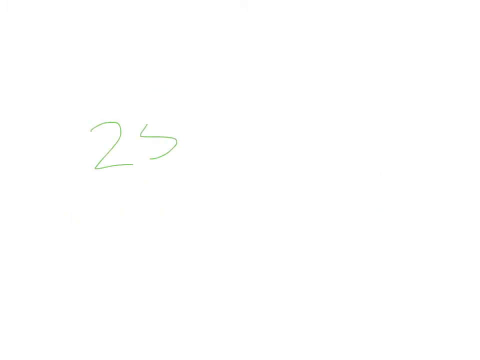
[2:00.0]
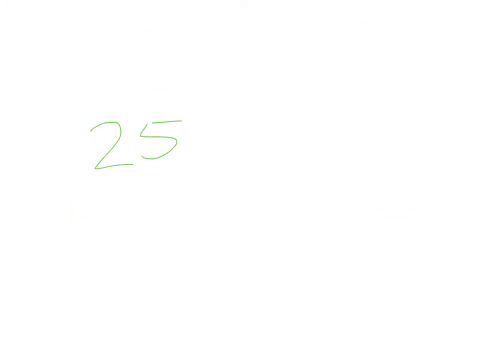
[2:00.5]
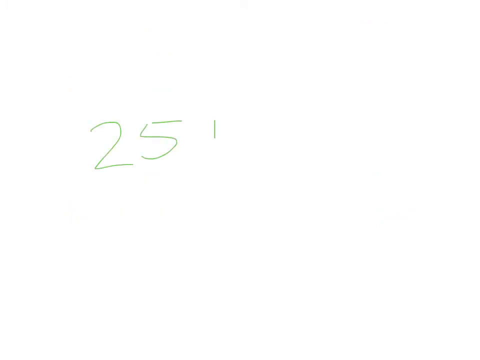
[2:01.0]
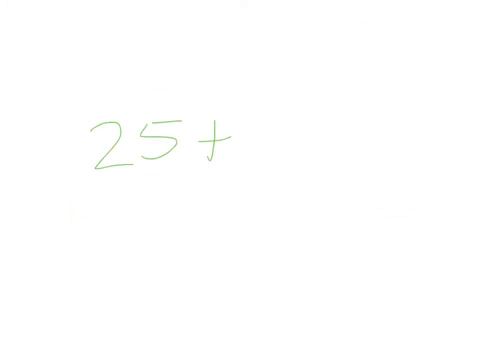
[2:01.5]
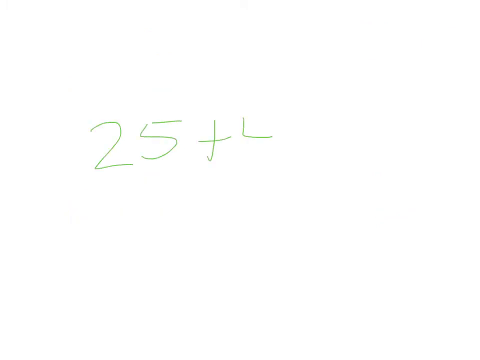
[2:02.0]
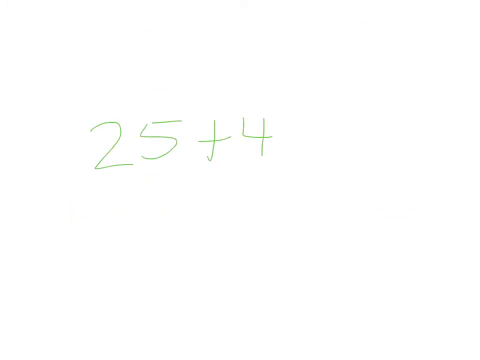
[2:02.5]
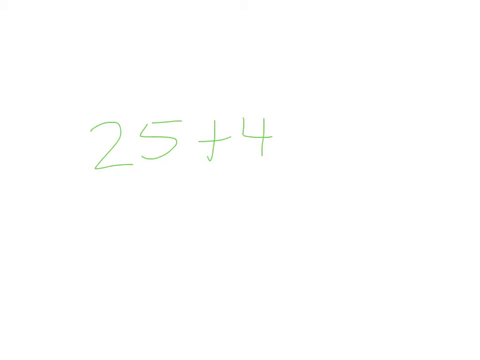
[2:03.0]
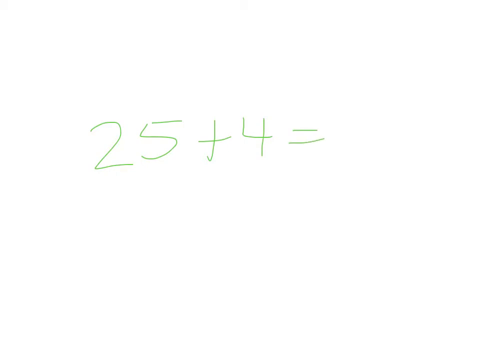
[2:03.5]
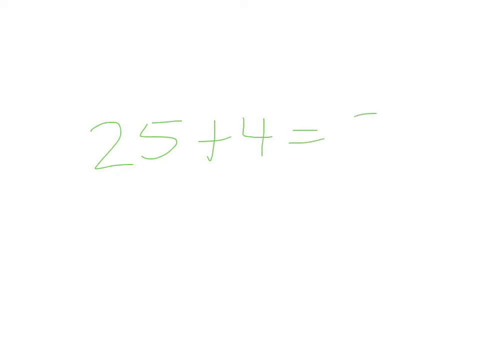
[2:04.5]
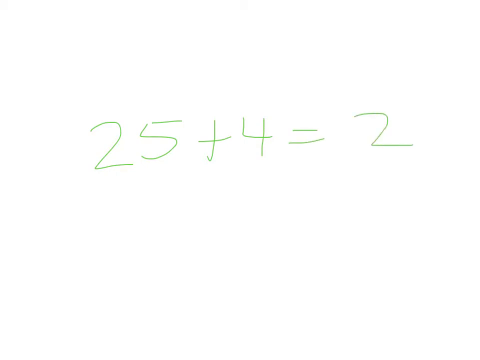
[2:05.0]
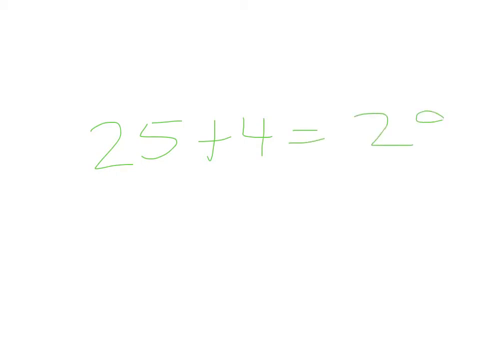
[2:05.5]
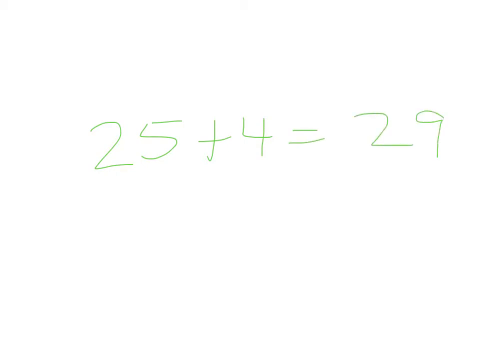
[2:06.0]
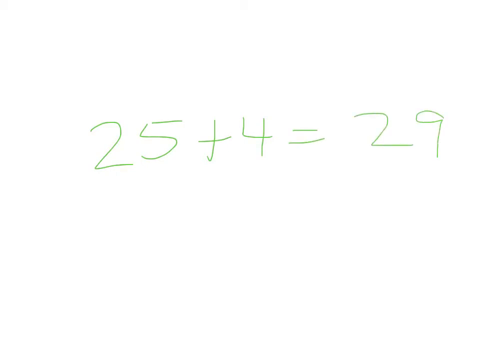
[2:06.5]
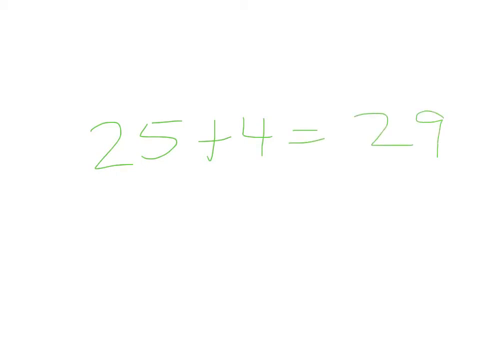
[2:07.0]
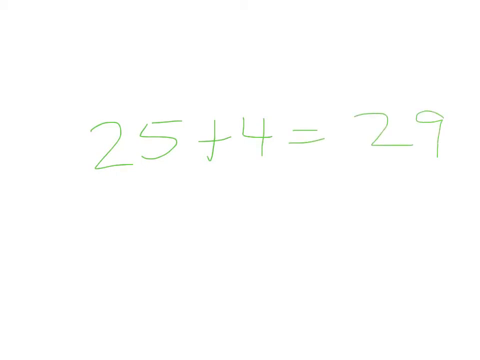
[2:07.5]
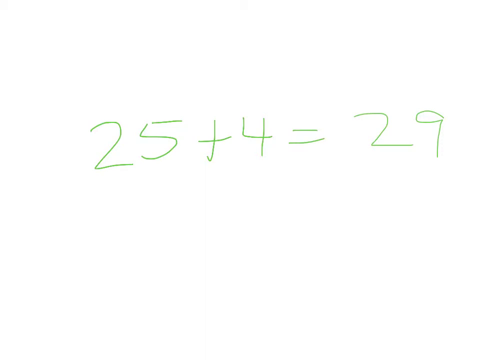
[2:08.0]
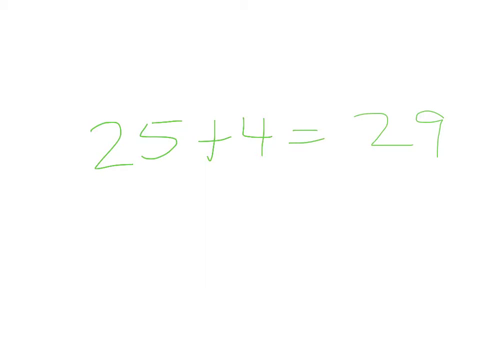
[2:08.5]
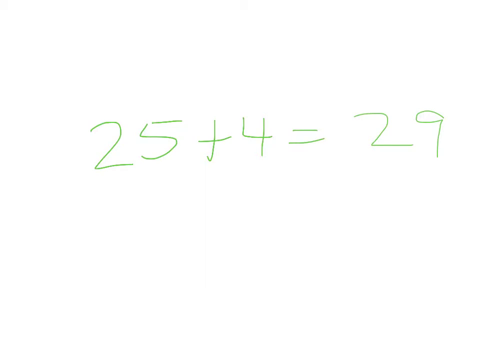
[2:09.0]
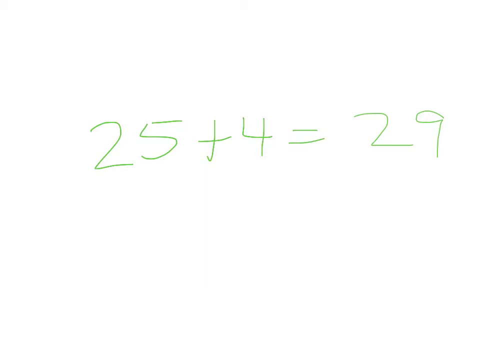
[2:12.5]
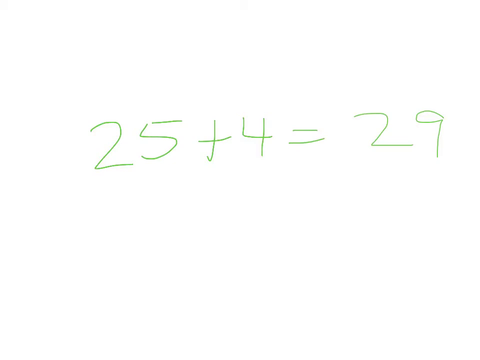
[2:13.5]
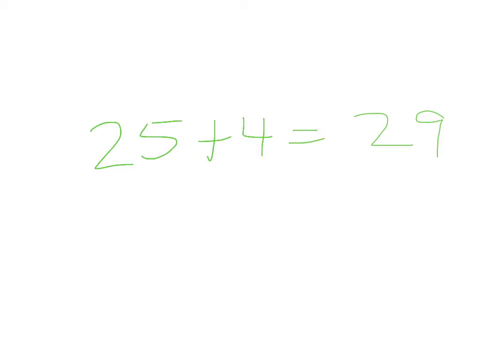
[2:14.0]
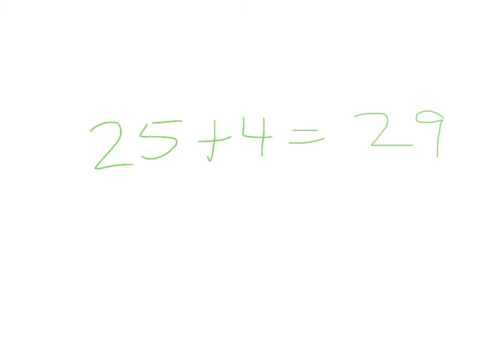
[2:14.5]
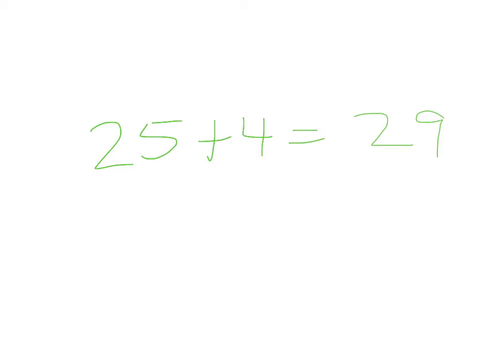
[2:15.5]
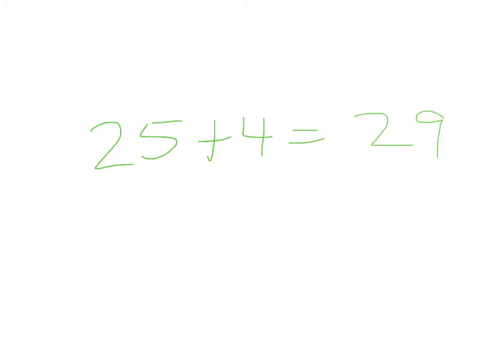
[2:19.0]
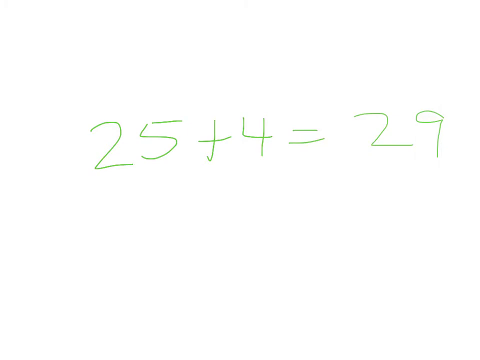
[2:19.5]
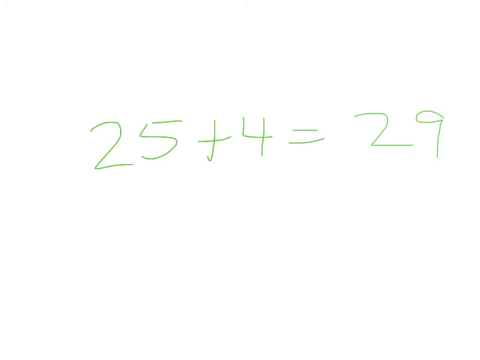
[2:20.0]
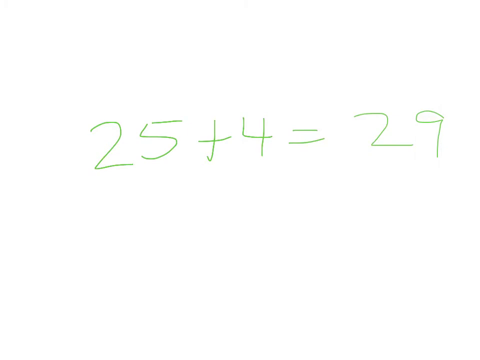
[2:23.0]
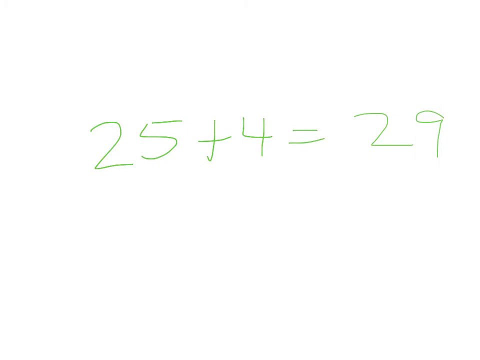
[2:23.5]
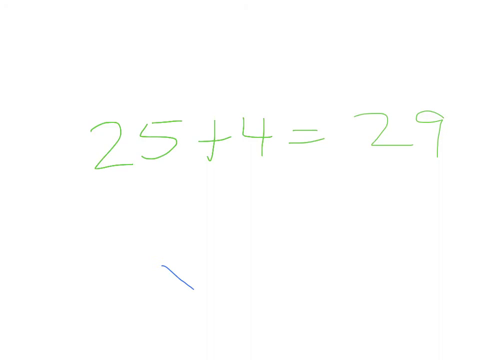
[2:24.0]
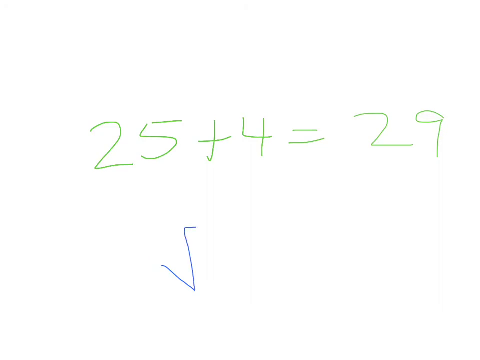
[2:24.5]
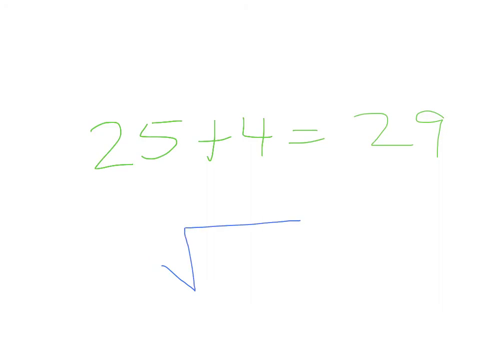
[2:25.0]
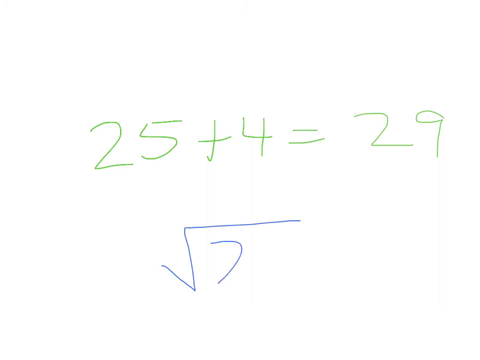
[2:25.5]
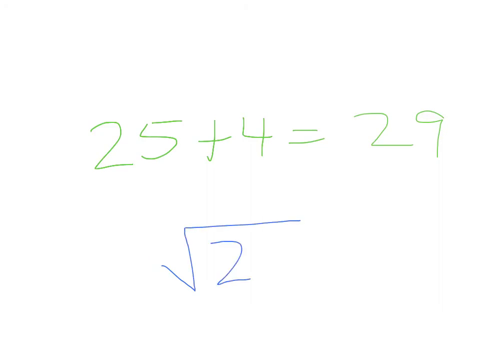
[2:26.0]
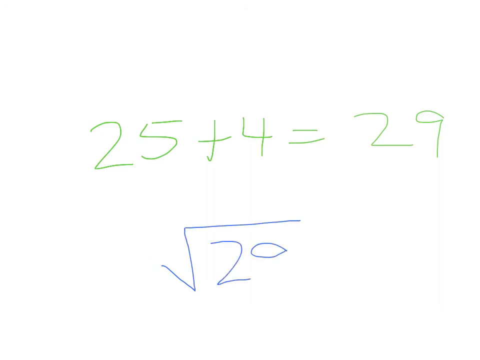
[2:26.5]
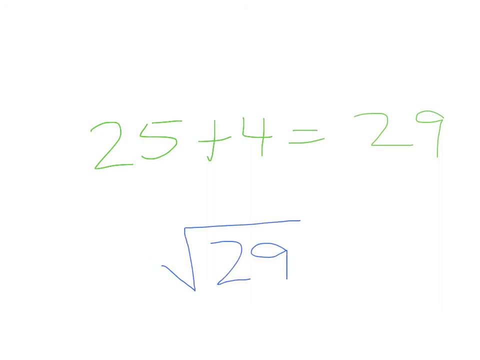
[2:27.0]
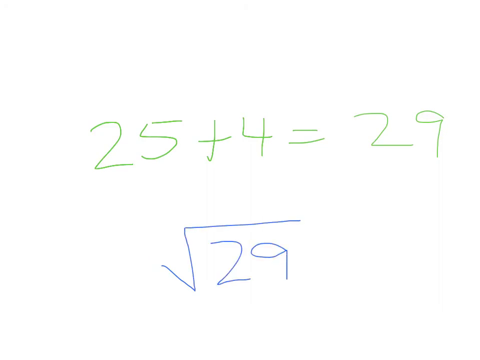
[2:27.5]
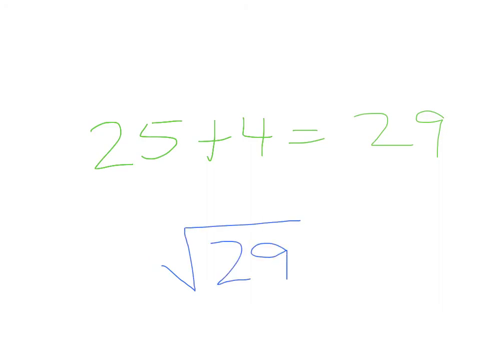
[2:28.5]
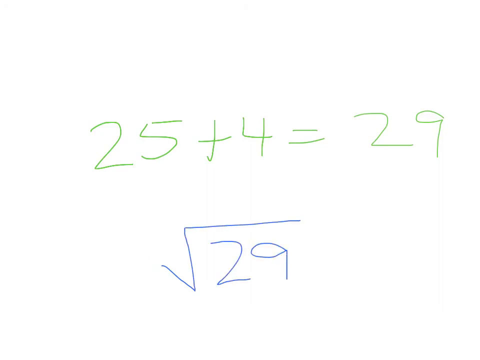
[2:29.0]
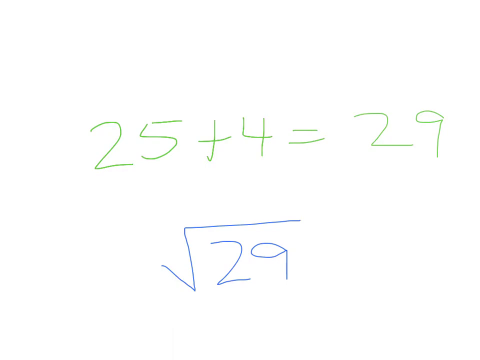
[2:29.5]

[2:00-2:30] Against the white background, an equation is written on the screen in bright green, each number and character drawn individually one after the other: "25+4=29". It stays on the screen for a few seconds. Then, underneath it, a √ (square root) symbol is drawn in blue, and under that the number 29, also in blue, each appearing one after the other. Just before the scene ends, two lines of text briefly flash on the screen at a diagonal running from the top left to the bottom right corner. The first line says "You can now find the distance between two coordinates" and the second says "using the Pythagorean theorem".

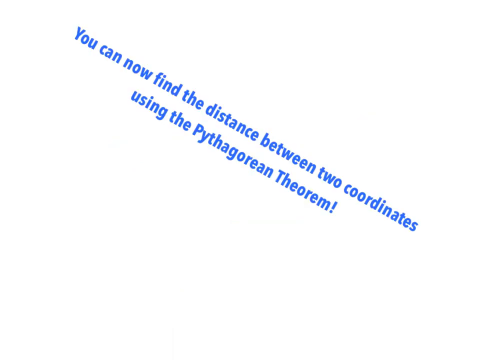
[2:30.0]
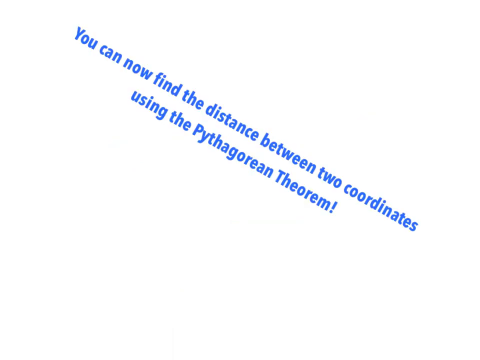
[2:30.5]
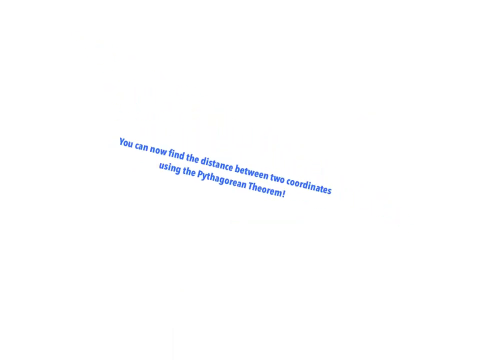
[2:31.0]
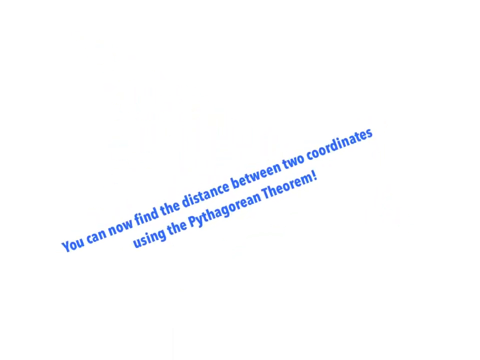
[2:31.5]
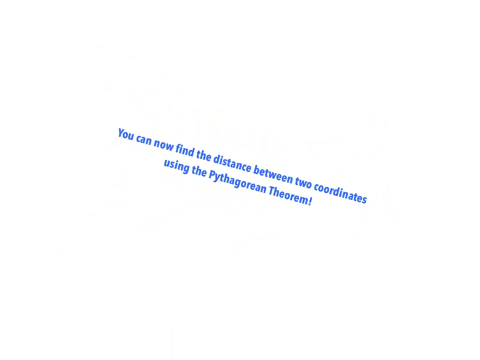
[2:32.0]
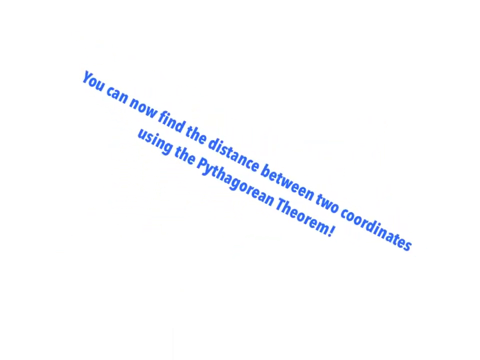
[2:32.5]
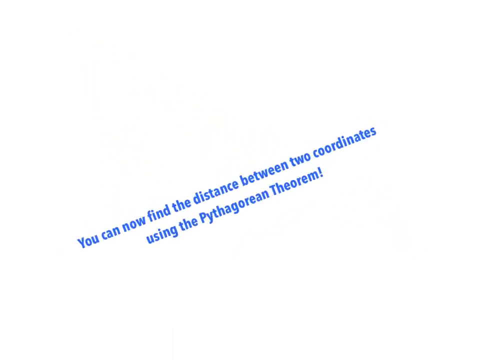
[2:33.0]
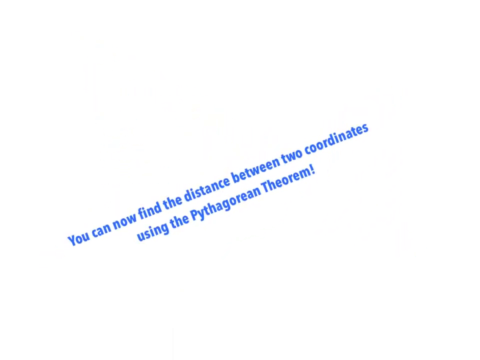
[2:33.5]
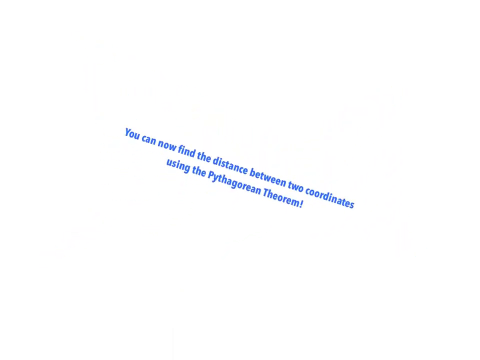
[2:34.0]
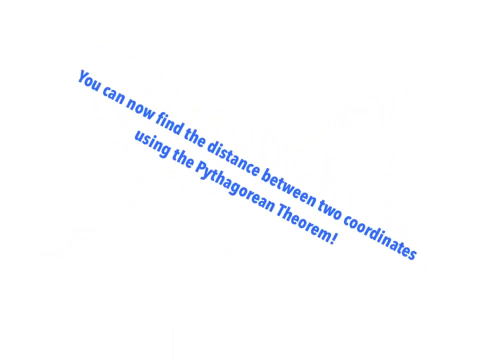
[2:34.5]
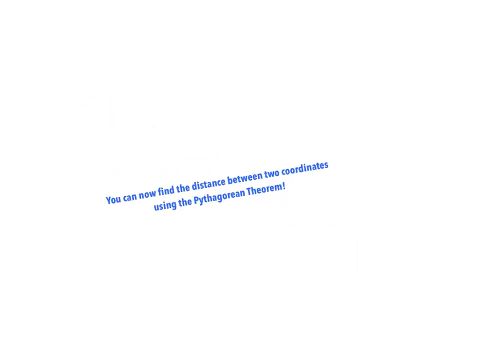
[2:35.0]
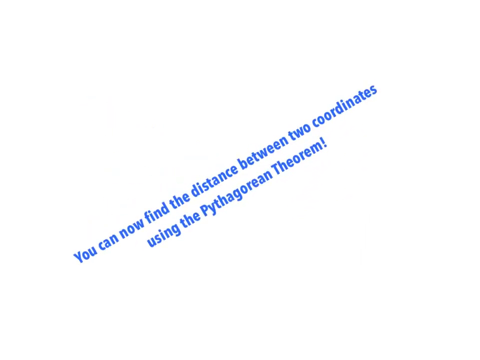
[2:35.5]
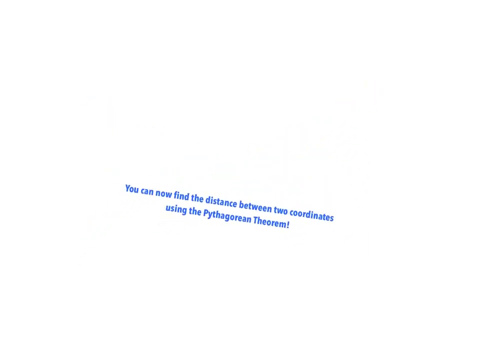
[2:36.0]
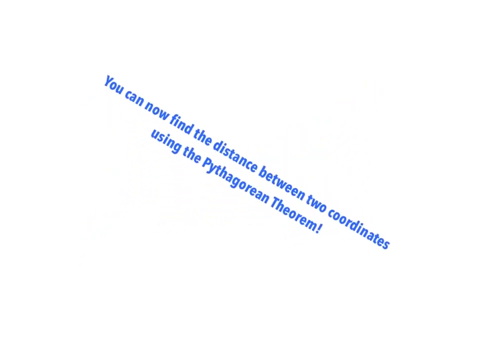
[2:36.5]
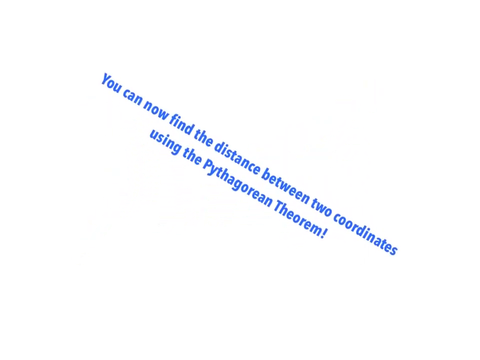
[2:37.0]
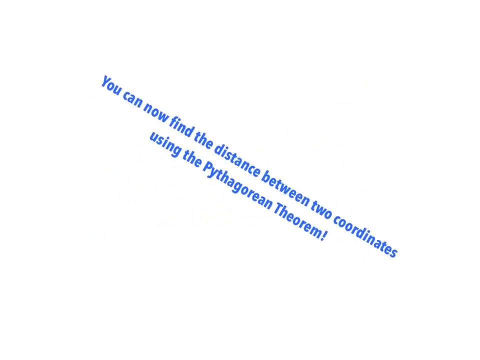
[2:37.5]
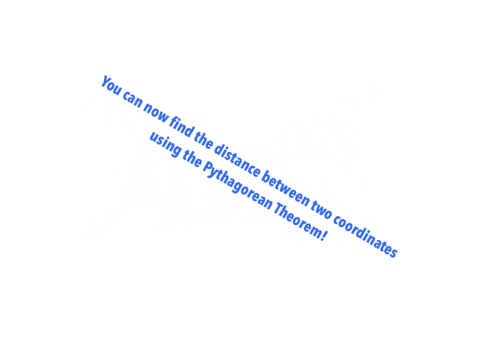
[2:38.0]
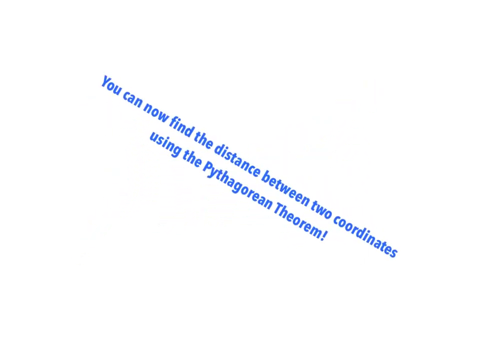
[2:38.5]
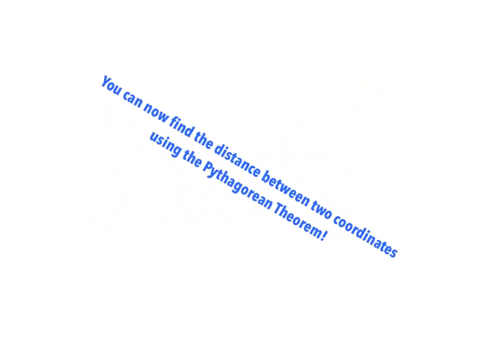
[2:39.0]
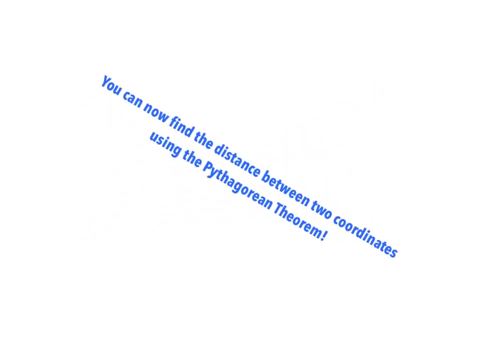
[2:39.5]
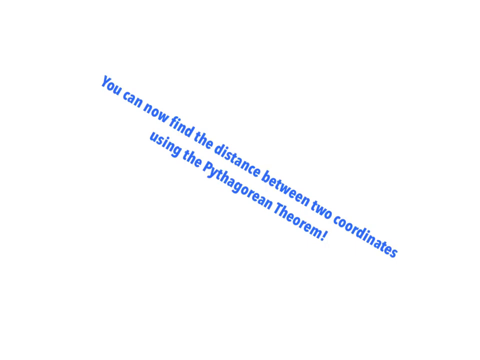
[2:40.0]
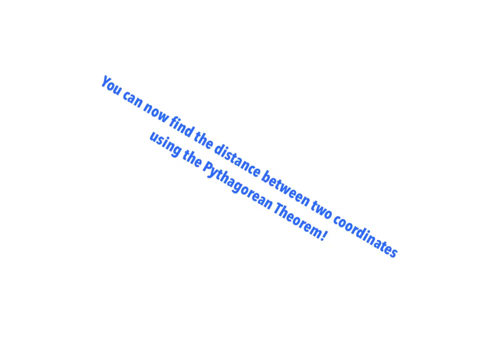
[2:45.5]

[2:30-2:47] Two lines of blue text are on a white background, on a diagonal facing the top left and bottom right of the screen: "You can now find the distance between two coordinates" and "using the Pythagorean theorem". Almost immediately the text starts to move: it zooms out and turns counterclockwise until it is on a diagonal facing the bottom left and top right, then zooms in and becomes larger, then zooms out and returns to its original position. It twists counterclockwise back to the second orientation again, and this repeats two more times before the text stops in the original position, diagonal from top left to bottom right. It stays stationary like that until the end.